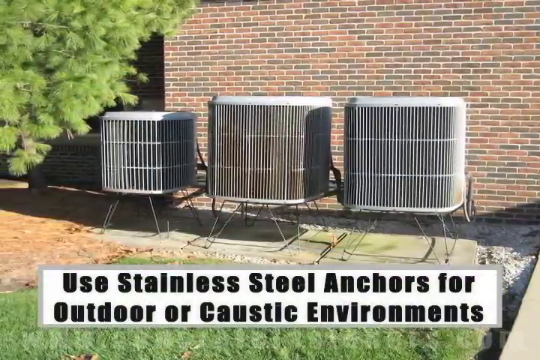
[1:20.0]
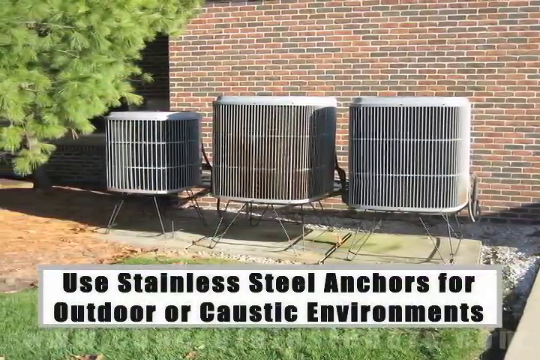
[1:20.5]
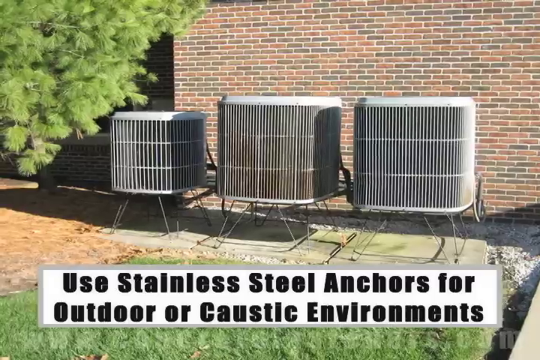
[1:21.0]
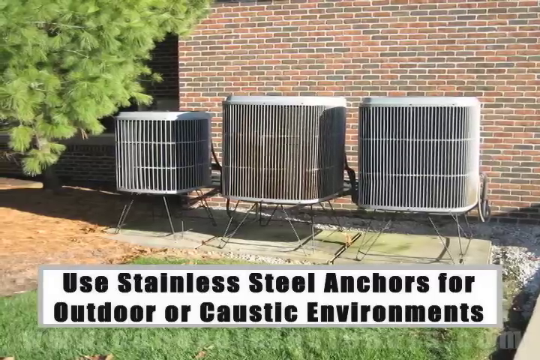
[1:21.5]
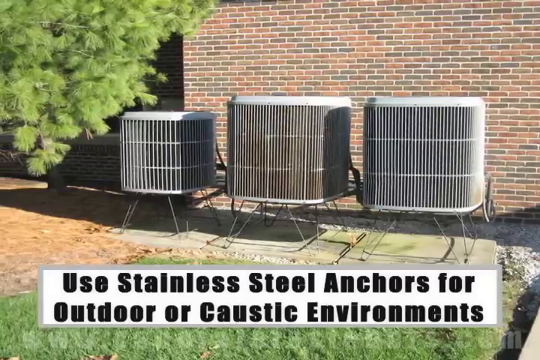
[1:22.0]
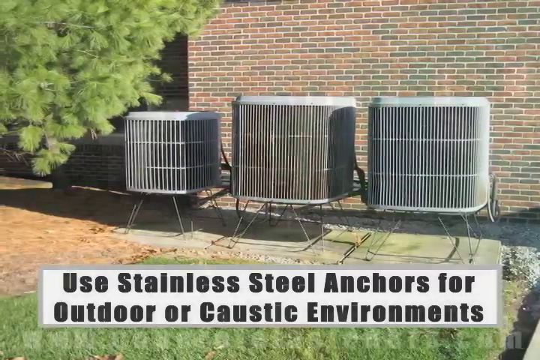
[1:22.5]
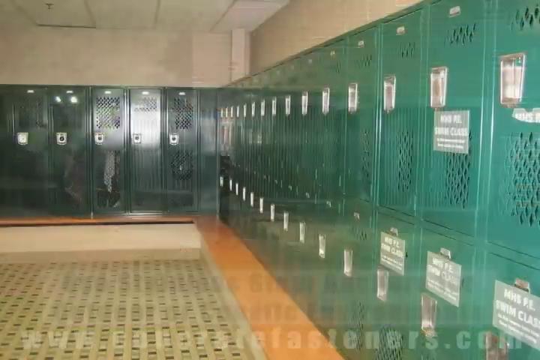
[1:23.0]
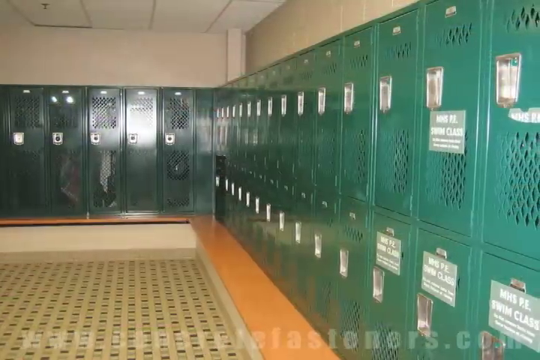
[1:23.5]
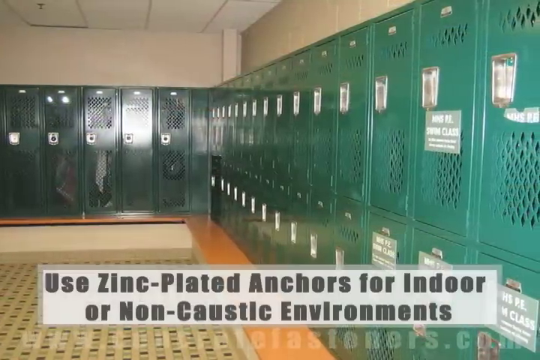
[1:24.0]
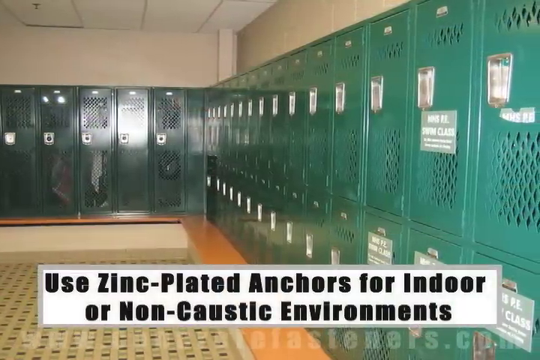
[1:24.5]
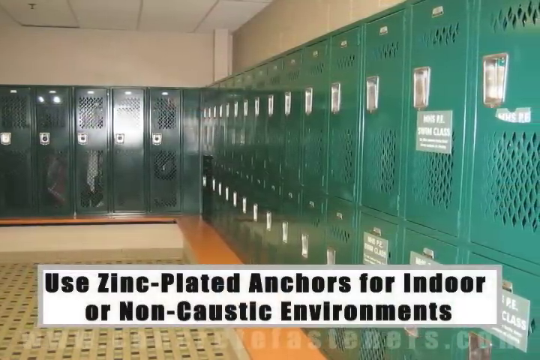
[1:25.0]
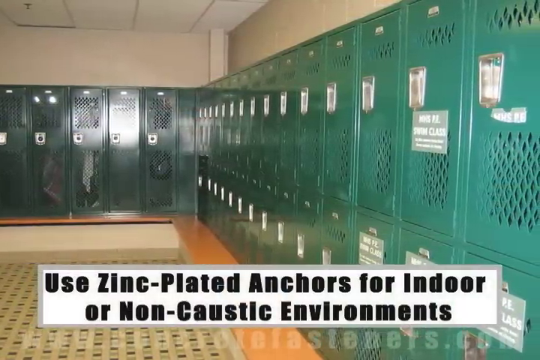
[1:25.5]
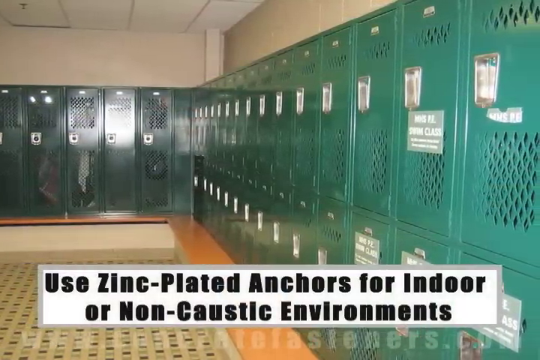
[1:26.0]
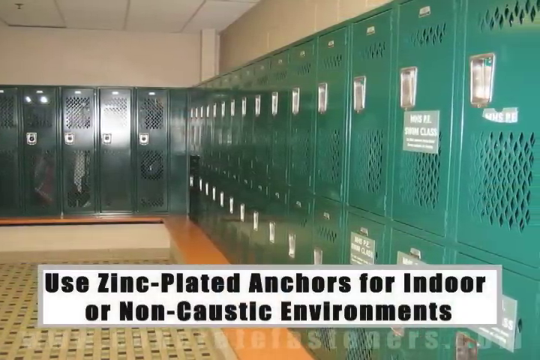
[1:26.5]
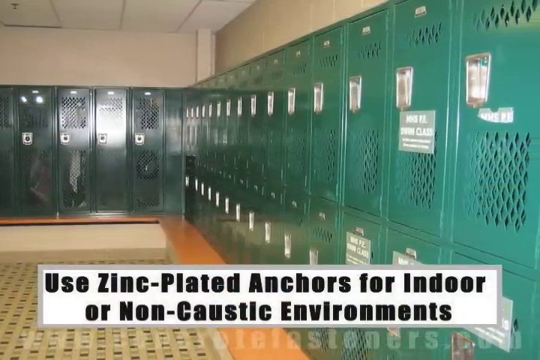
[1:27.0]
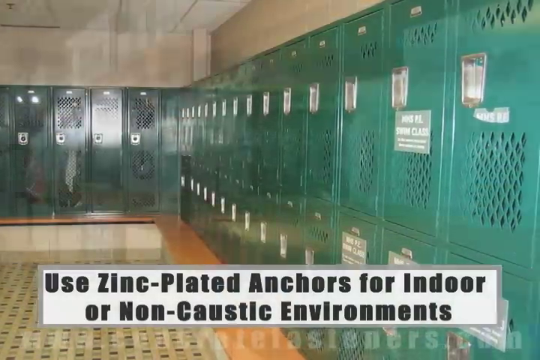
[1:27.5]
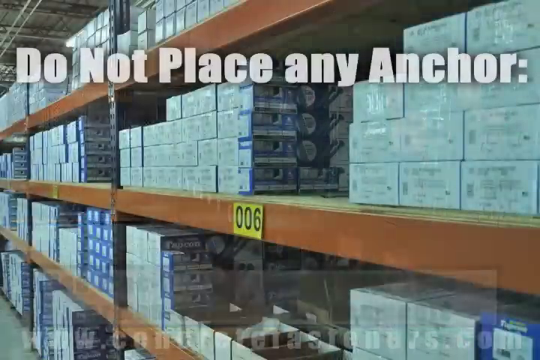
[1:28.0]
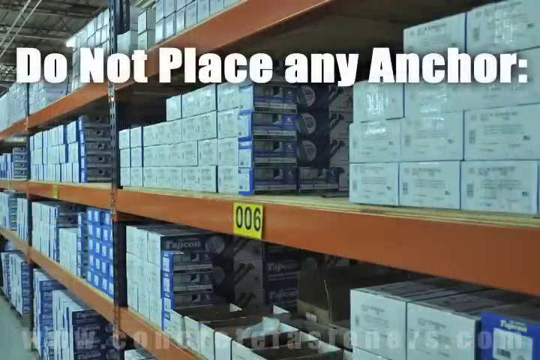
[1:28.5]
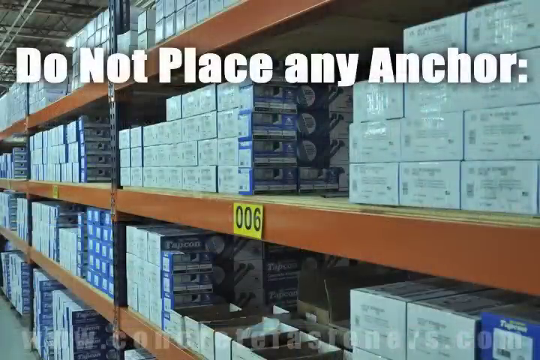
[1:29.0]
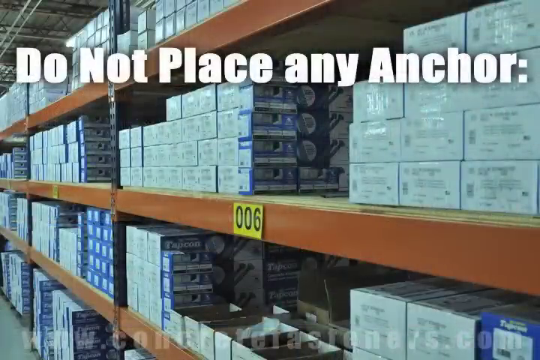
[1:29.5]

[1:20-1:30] The AC units continue to be shown, with text at the bottom advising the use of stainless steel anchors for outdoor or caustic environments. A row of metal lockers aligned against a wall is then shown, with text at the bottom of the screen reading "use included anchors for indoor or non-caustic environments." The video then returns to the same "please consider the following" page seen earlier, with boxes in the background, which says "do not place any anchor."